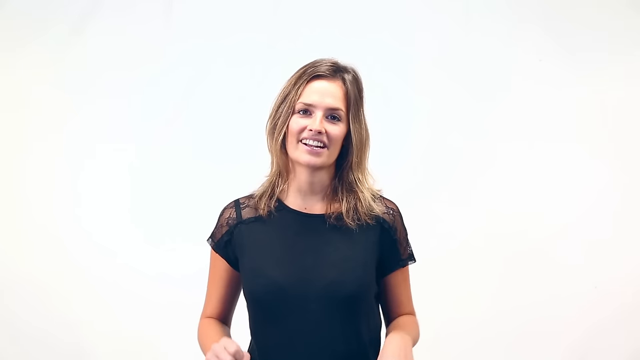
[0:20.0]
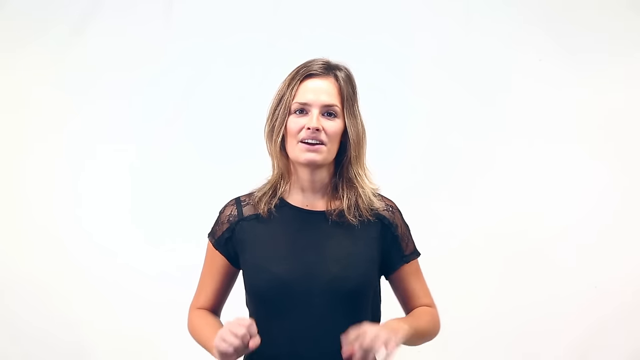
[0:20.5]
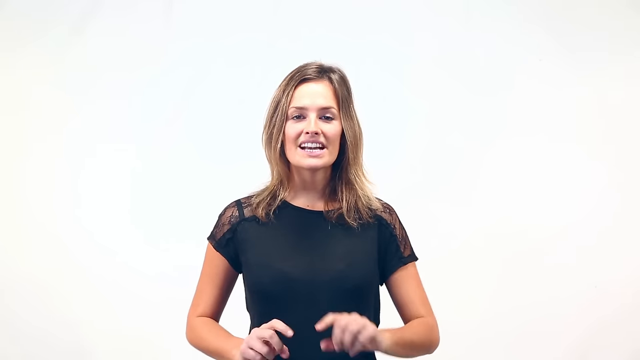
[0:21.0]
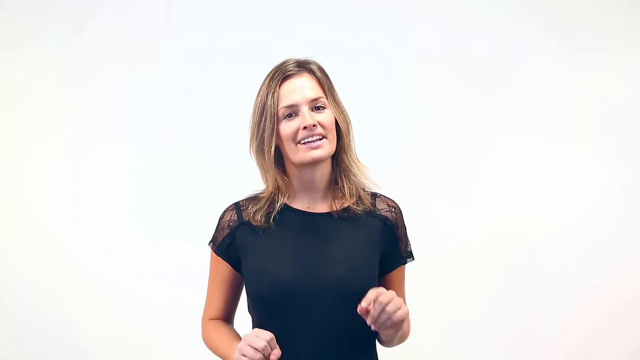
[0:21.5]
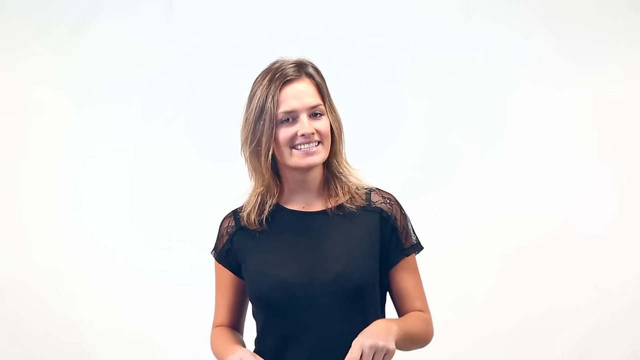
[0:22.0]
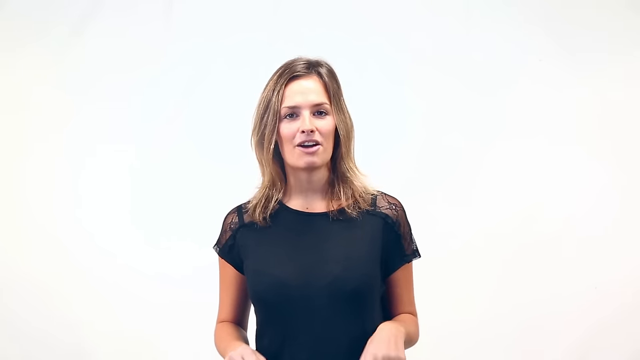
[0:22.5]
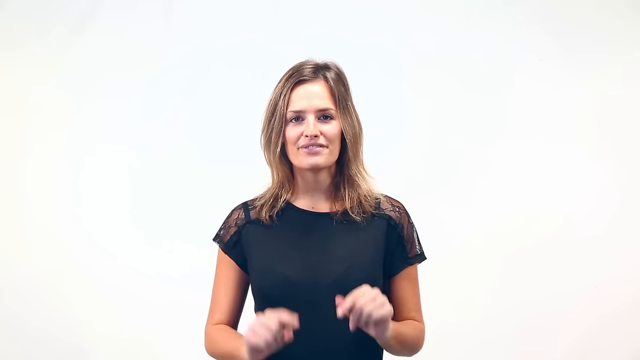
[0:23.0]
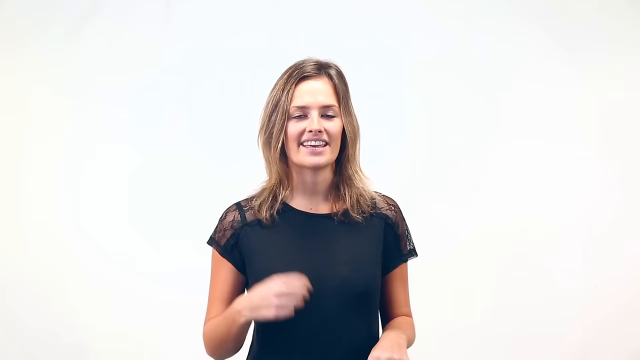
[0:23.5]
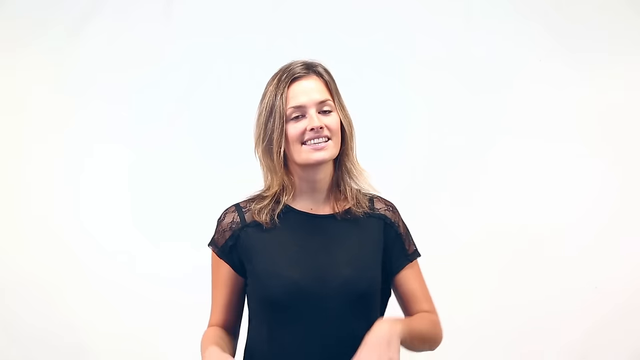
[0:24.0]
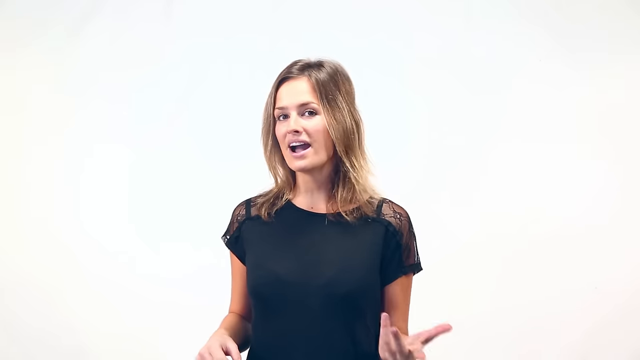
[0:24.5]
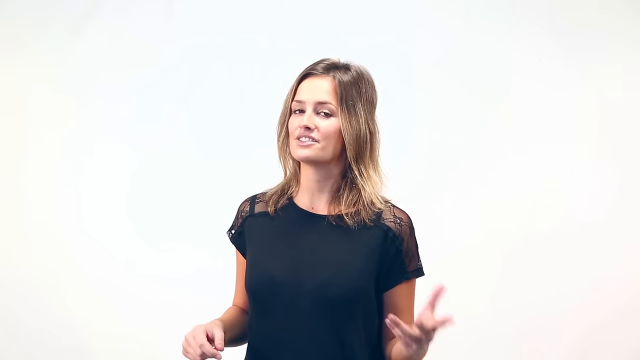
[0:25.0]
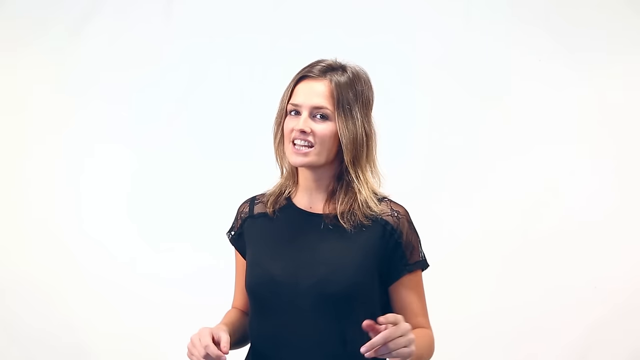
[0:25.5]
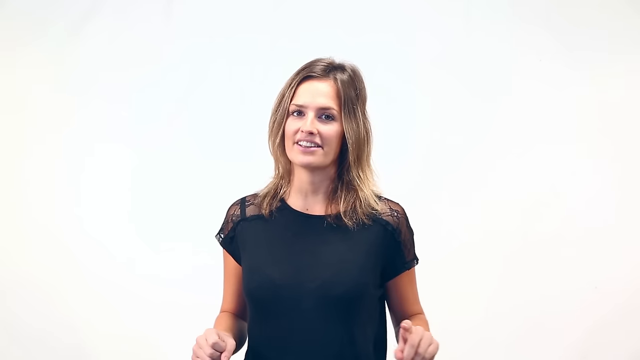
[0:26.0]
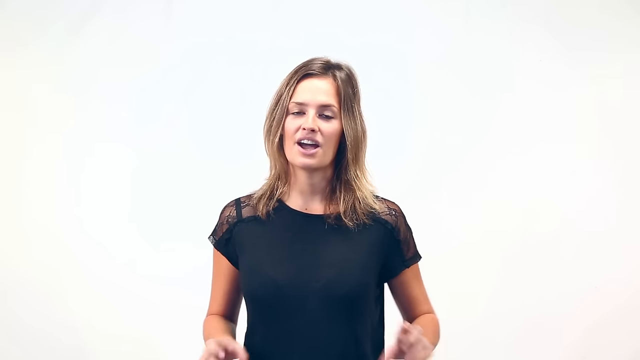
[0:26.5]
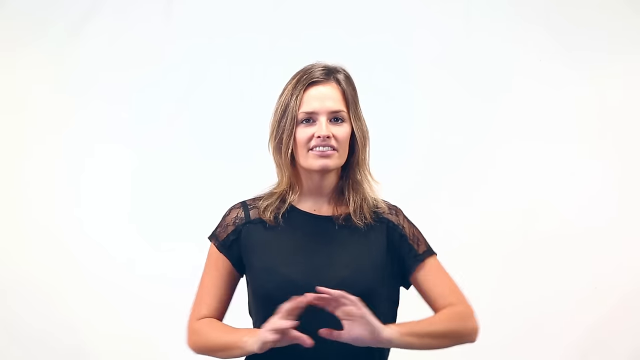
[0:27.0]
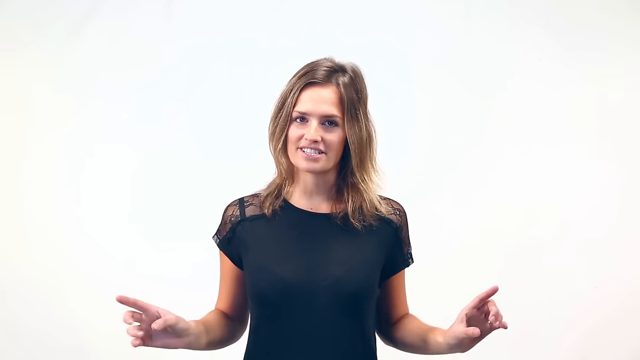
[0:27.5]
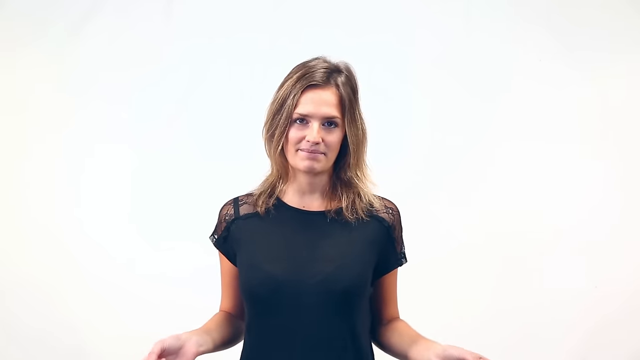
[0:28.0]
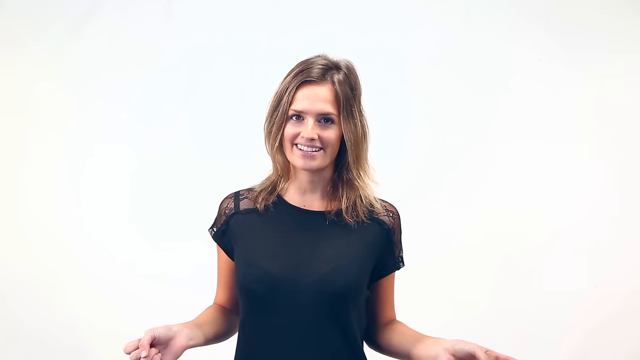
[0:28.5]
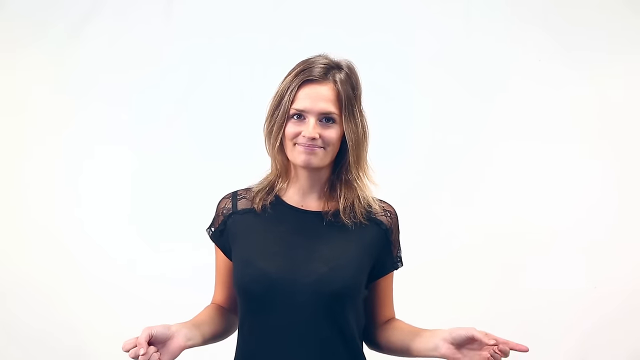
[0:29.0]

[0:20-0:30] A woman with long brown hair and a black blouse speaks in front of a plain white, featureless background. She smiles and moves her hands as she speaks, looking into the camera the entire time and making several hand gestures. She points to the viewer with both hands, then extends both palms and raises her head to look up slightly. She puts both hands in front of her, extends her arm waving outward in a dismissive motion, and then points down with both hands.